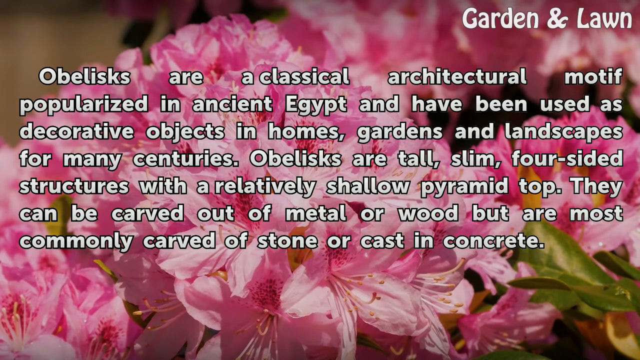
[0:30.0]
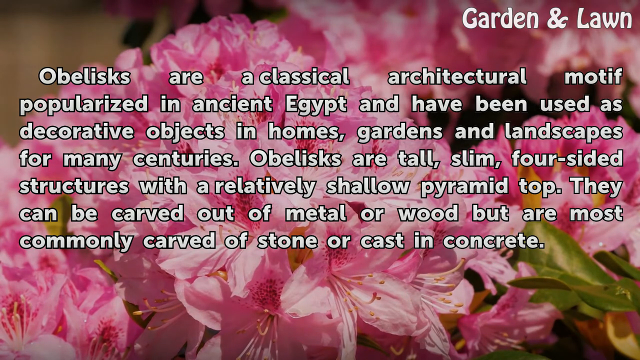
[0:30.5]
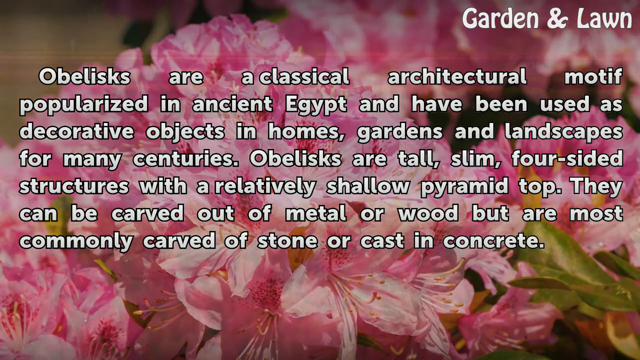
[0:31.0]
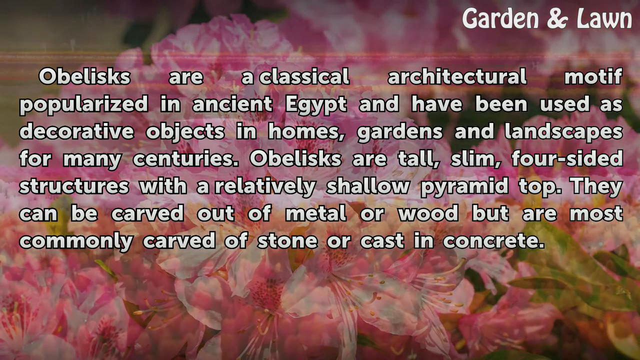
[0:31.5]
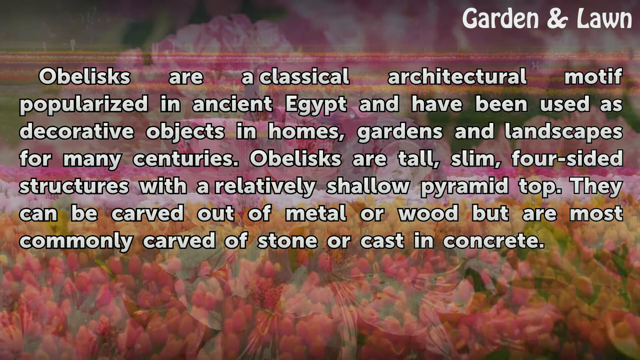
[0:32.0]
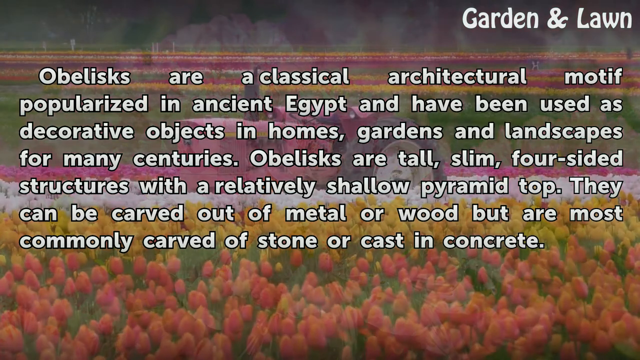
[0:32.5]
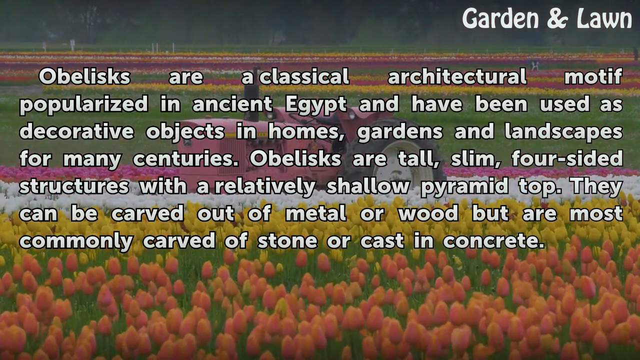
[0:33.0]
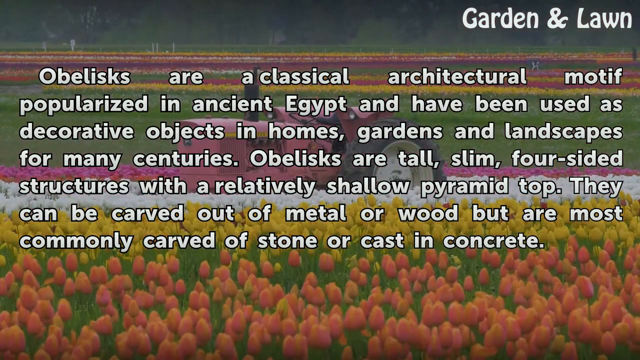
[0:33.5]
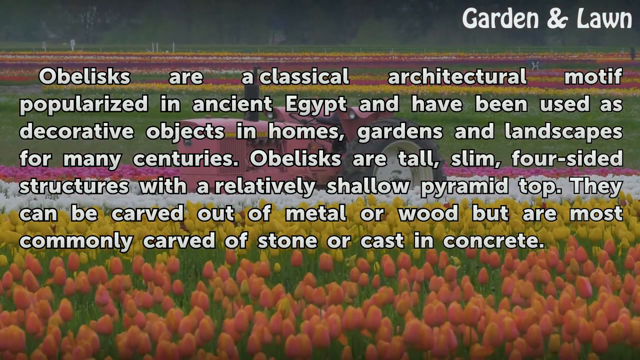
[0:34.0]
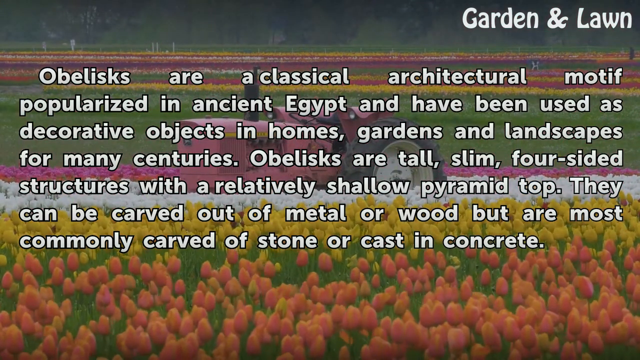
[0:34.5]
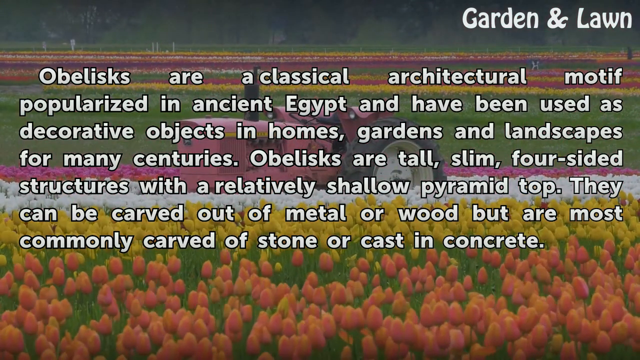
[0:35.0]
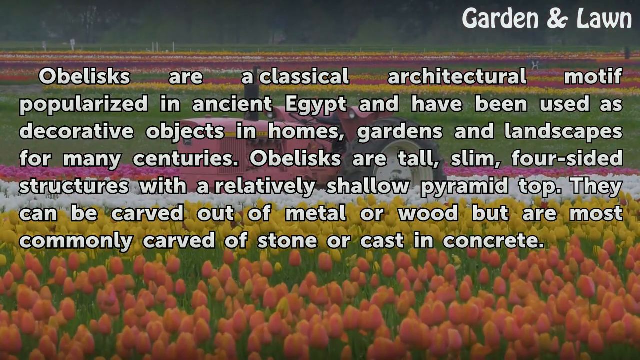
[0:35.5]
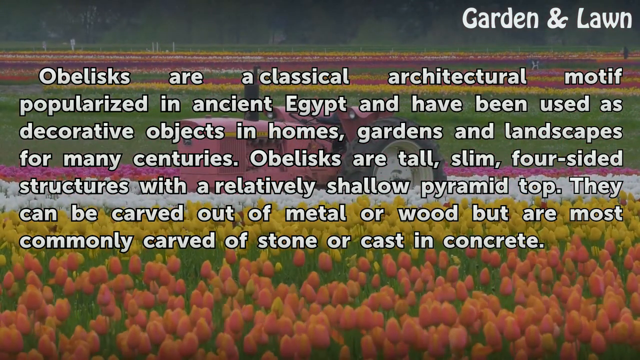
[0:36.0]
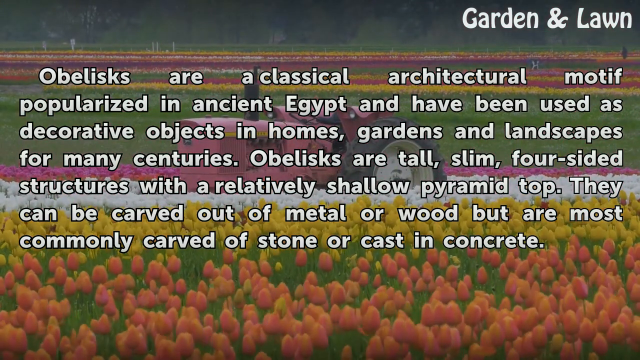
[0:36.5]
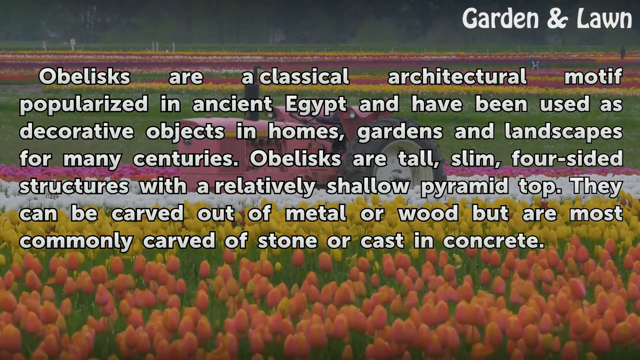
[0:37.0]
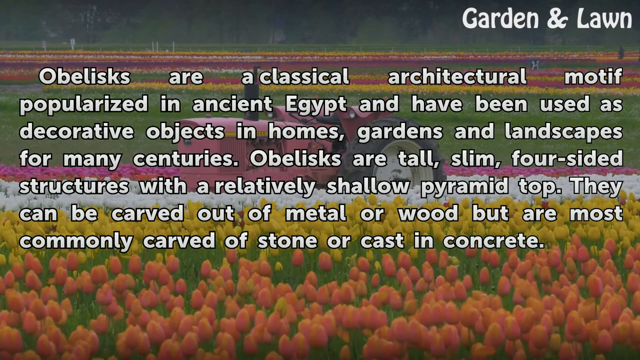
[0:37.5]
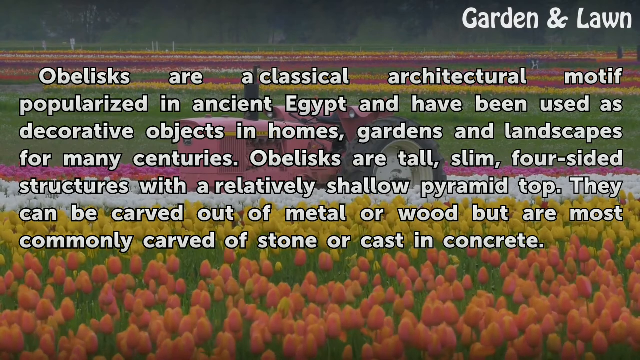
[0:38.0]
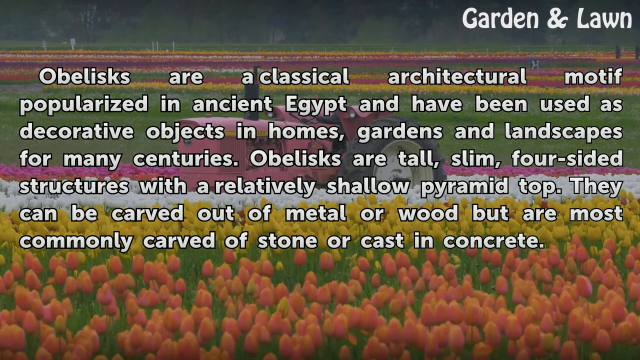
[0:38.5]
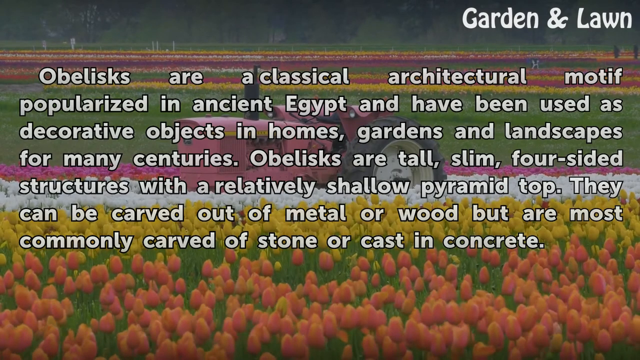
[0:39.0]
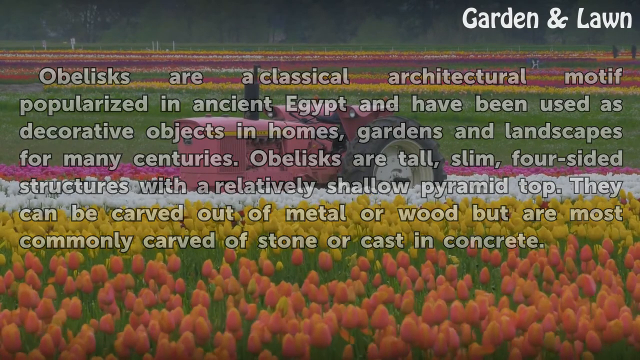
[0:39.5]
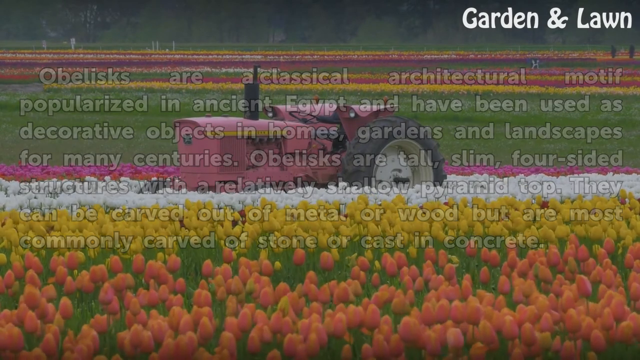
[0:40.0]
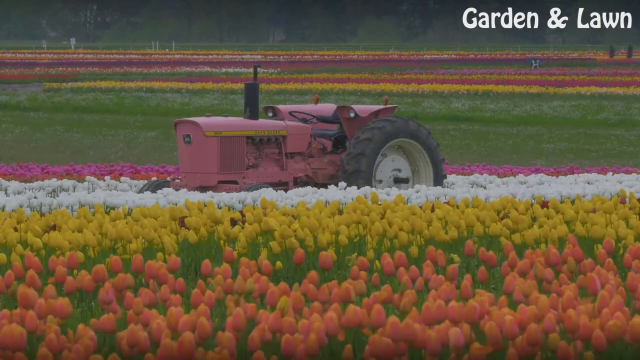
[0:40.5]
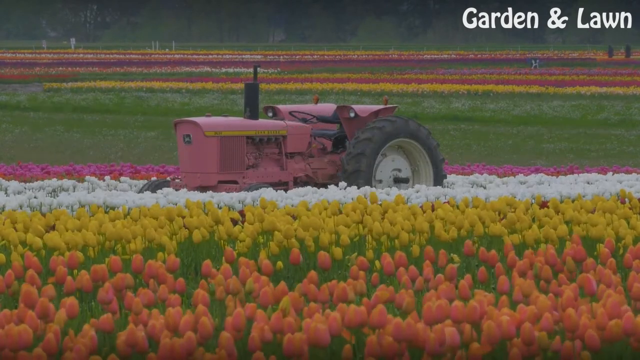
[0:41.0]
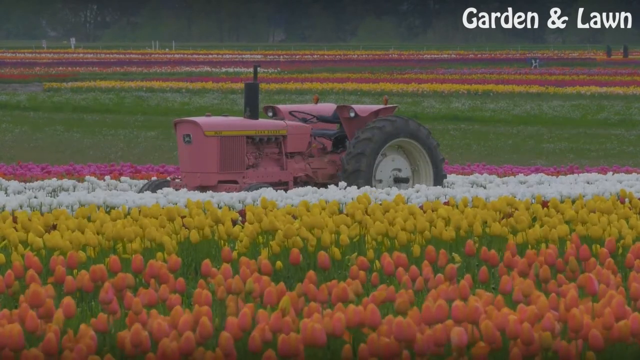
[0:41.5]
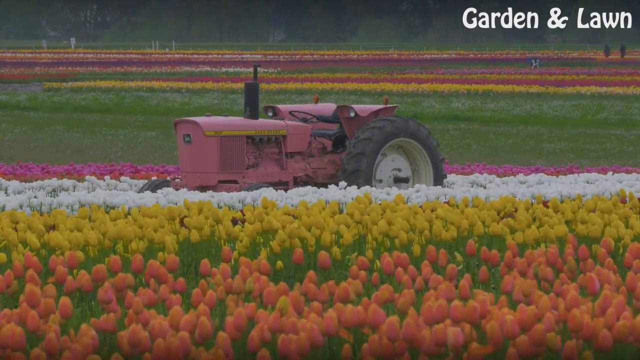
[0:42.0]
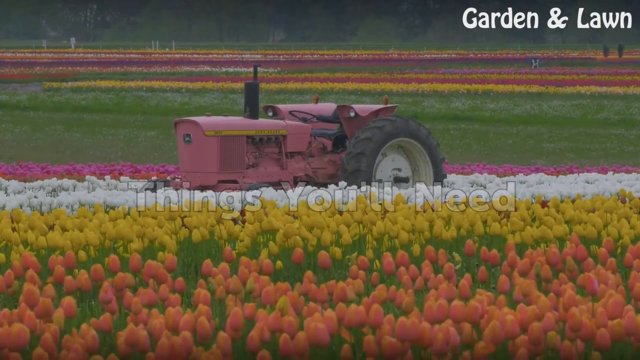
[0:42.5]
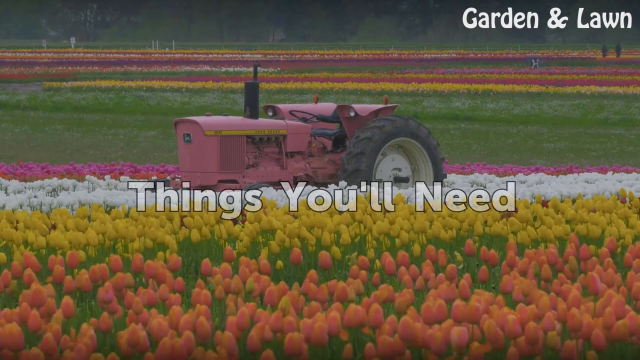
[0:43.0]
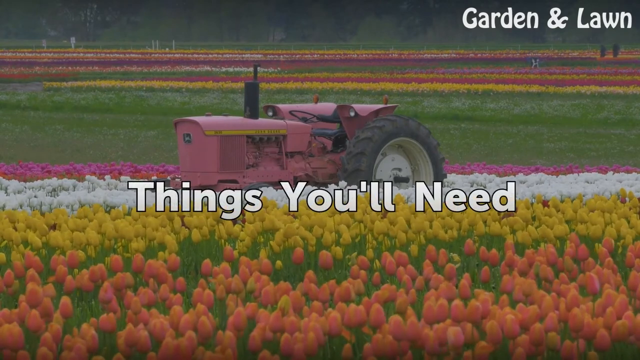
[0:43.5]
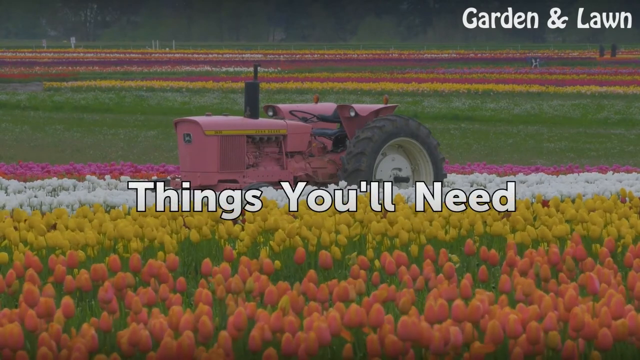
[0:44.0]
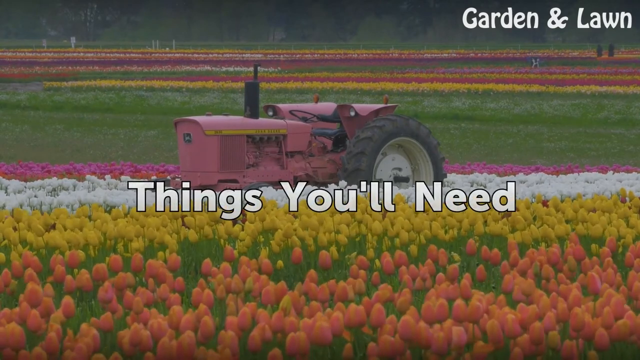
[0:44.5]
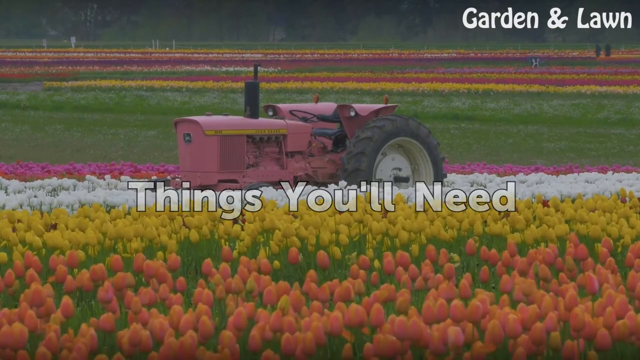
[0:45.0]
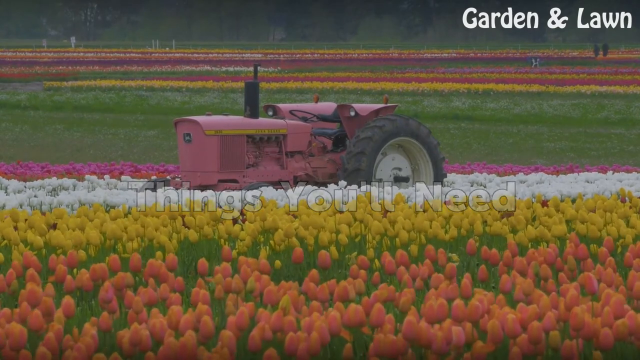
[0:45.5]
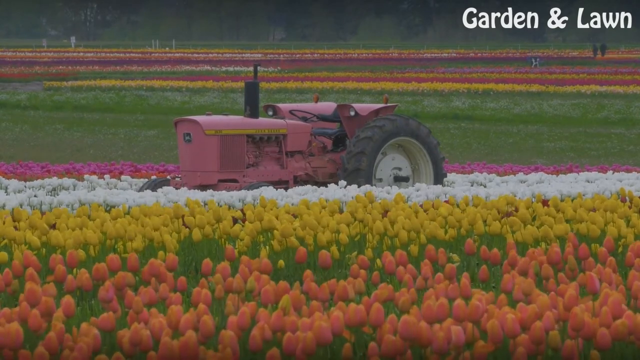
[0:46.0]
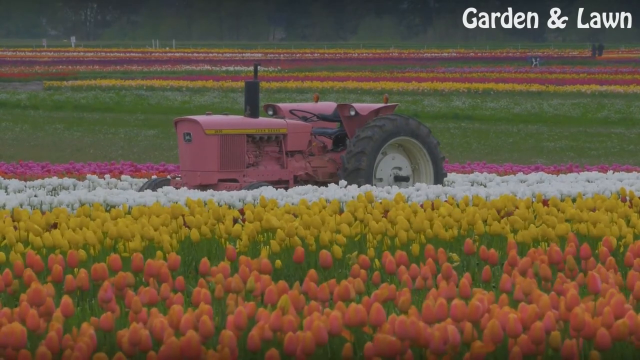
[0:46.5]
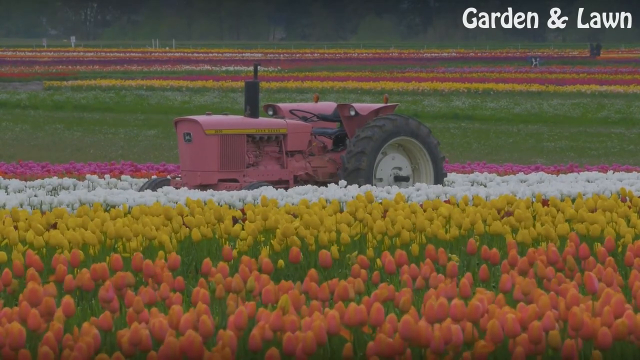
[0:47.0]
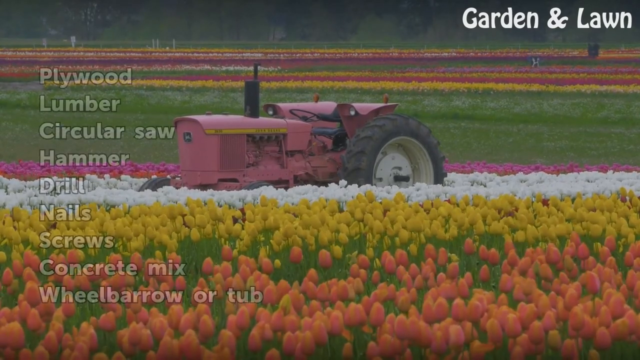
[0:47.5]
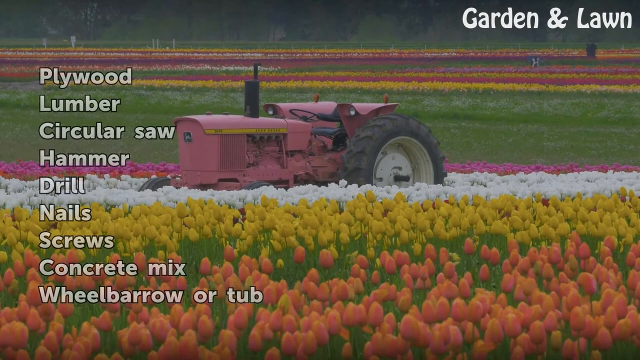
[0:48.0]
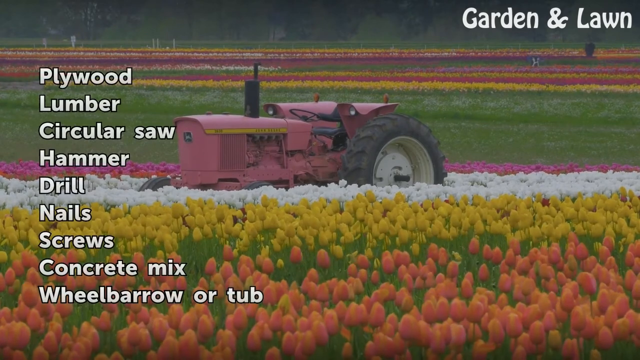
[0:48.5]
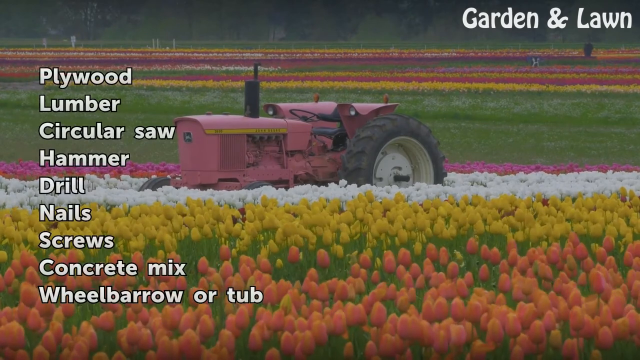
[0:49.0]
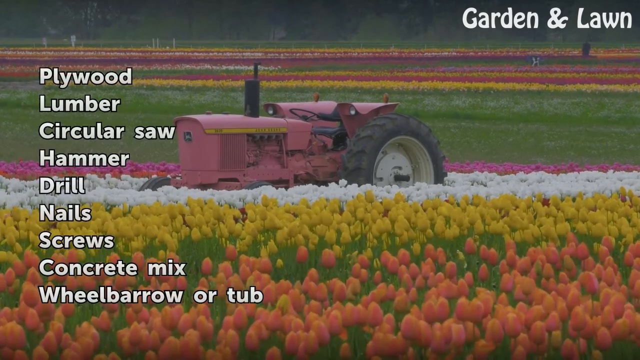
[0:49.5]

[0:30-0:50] The text describing obelisks continues on screen. In the upper right corner, in white font, is "garden and lawn." In the center of the screen, in white font outlined in black, the text reads "Obelisks are a classical architectural motif popularized in ancient Egypt and have been used as a decorative objects in homes, gardens, and landscapes for many centuries. Obelisks are tall, slim, four-sided structures with a relatively shallow pyramid top. They can be carved out of metal or wood, but are most commonly carved of stone or cast in concrete." Behind the text is a field of multicolored tulips ranging from orange to yellow. There is a pink tractor, and more tulip fields stretch off into the distance up to a tree line. The tulips move in the wind, and the text fades out. New white text in the center of the screen reads "things you'll need." On the left side of the screen, a vertical list in white font reads "Plywood, lumber, circular saw, hammer, drill, nails, screws, concrete mix, wheelbarrow or tub."